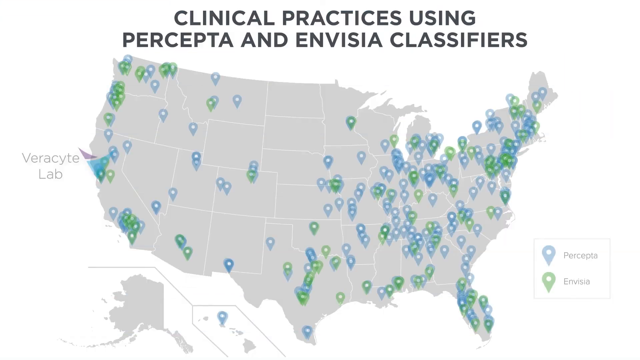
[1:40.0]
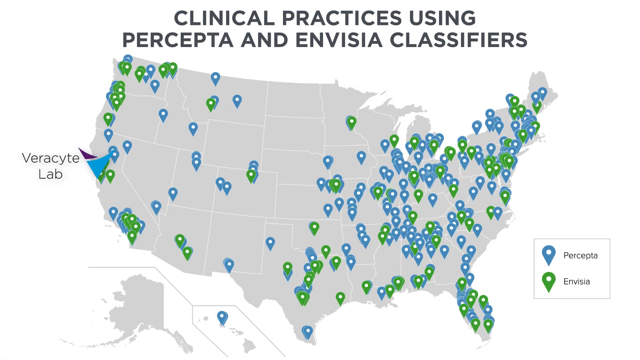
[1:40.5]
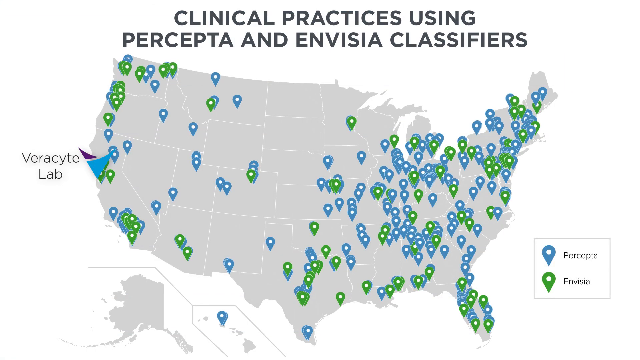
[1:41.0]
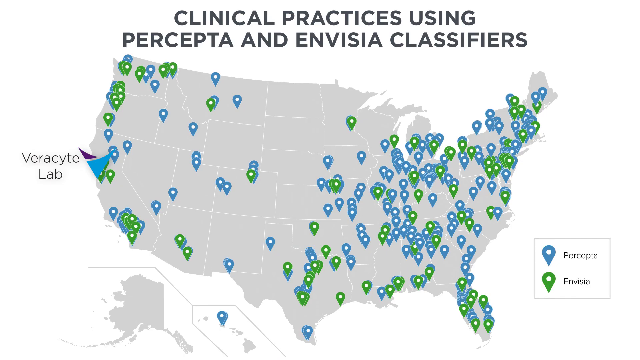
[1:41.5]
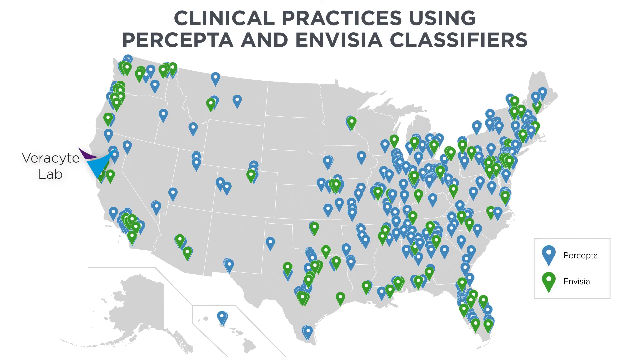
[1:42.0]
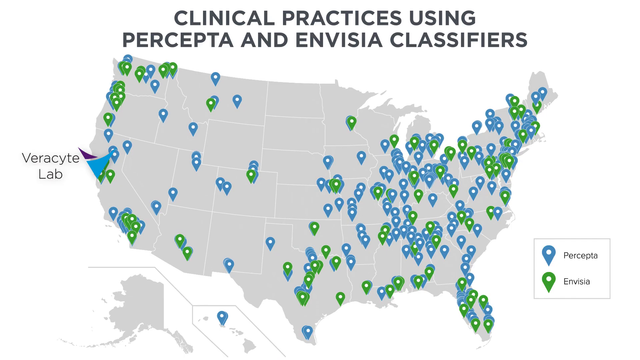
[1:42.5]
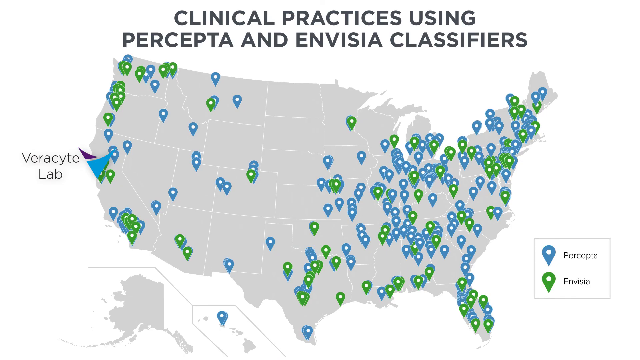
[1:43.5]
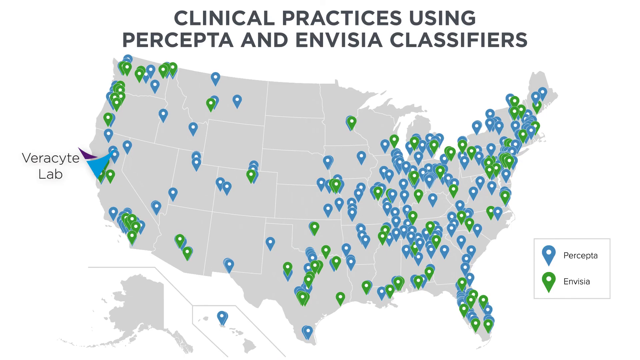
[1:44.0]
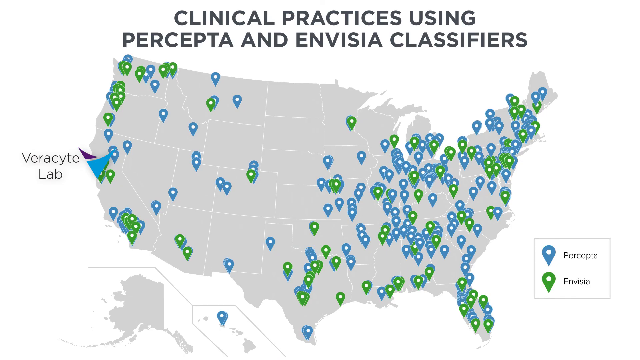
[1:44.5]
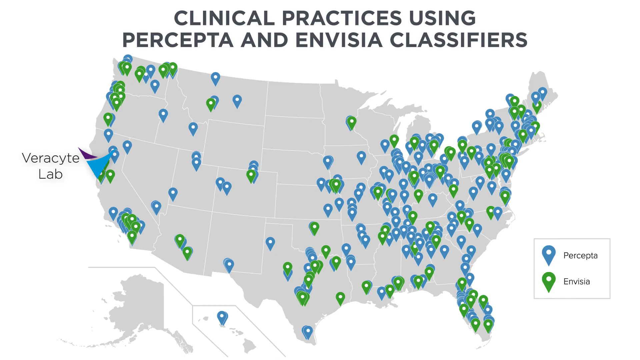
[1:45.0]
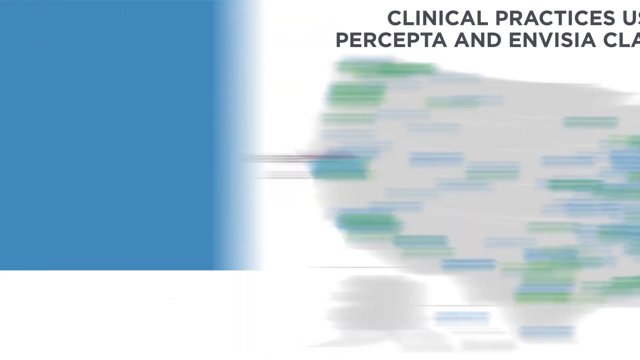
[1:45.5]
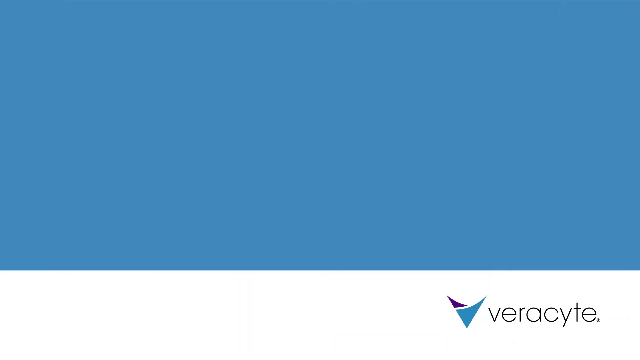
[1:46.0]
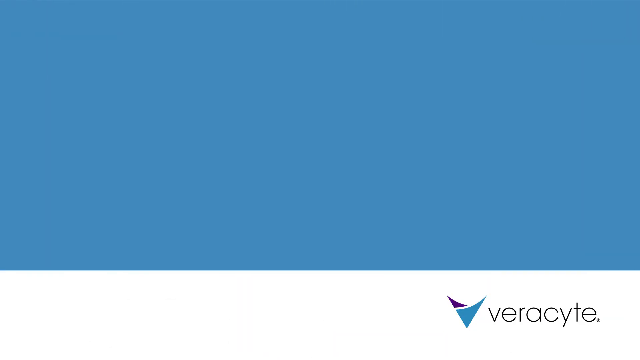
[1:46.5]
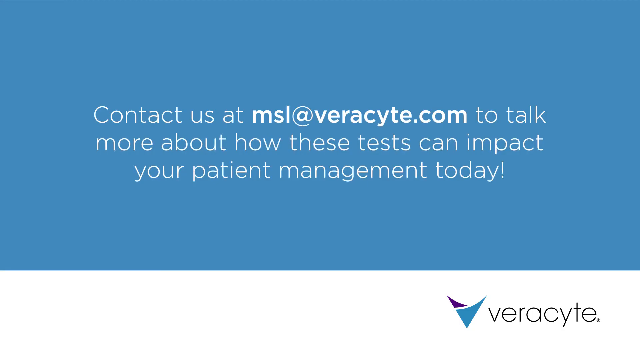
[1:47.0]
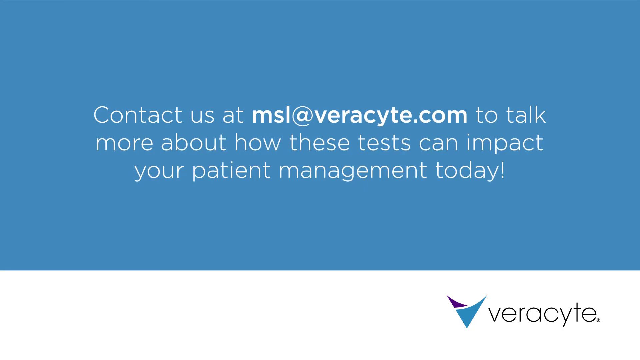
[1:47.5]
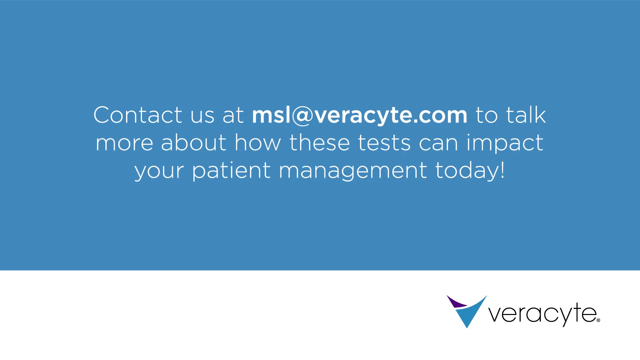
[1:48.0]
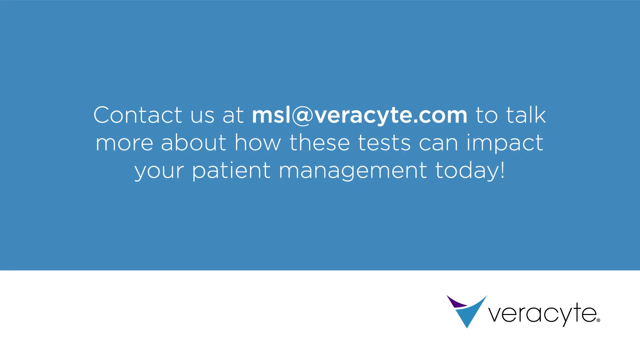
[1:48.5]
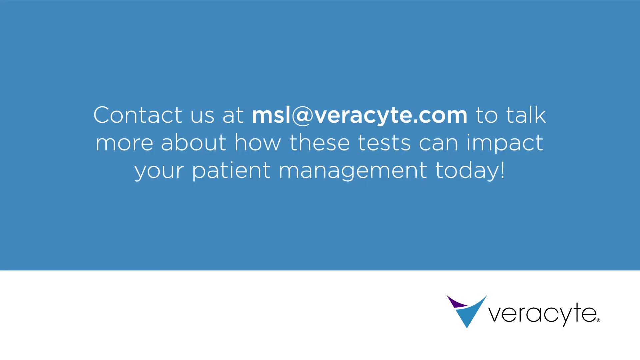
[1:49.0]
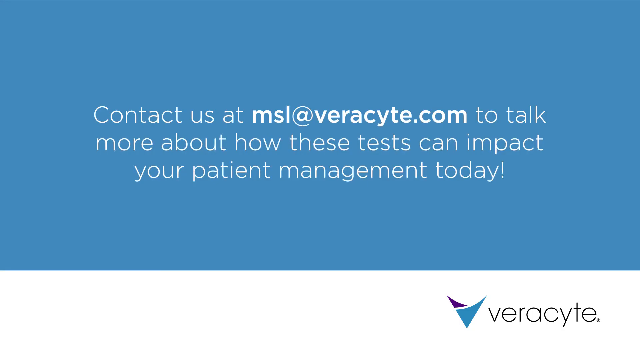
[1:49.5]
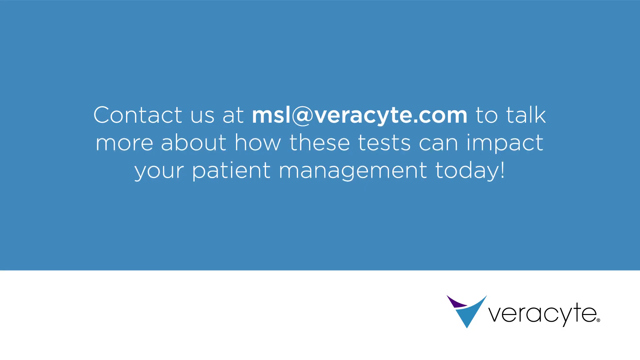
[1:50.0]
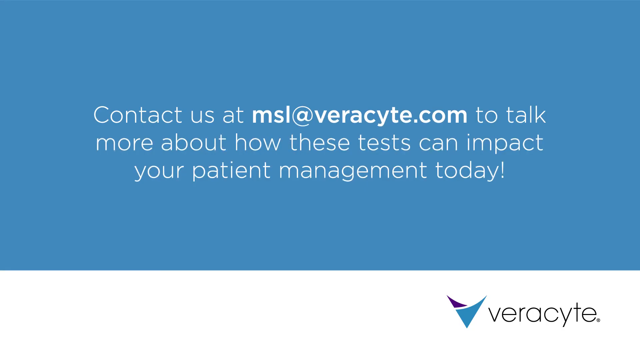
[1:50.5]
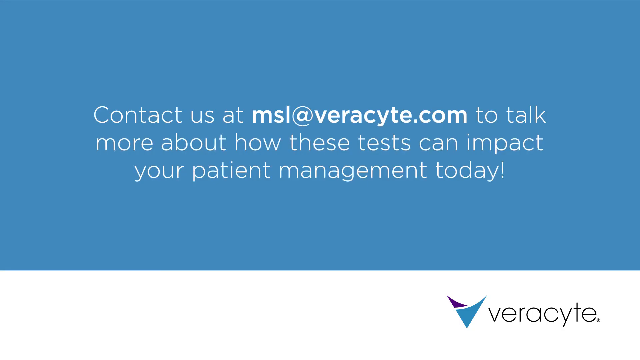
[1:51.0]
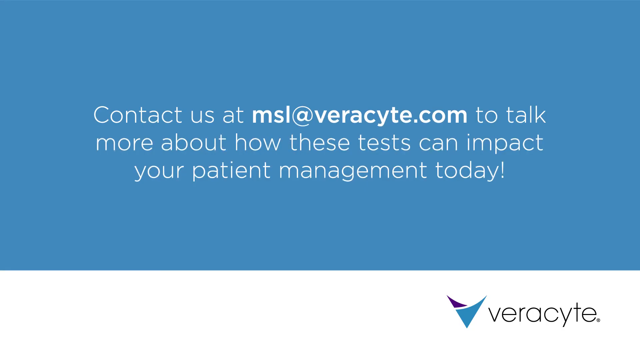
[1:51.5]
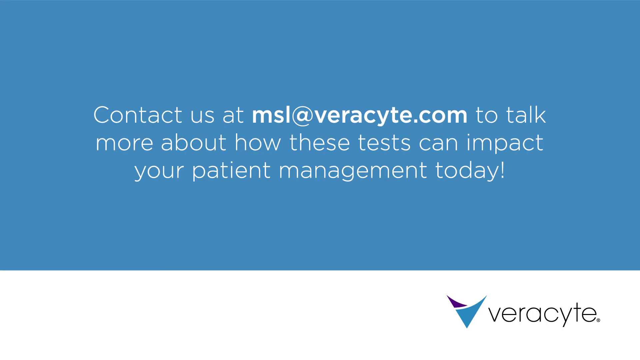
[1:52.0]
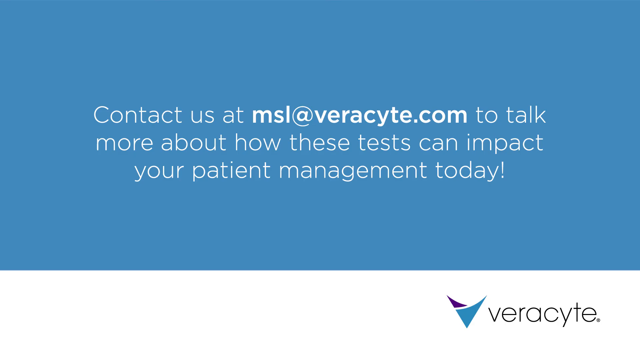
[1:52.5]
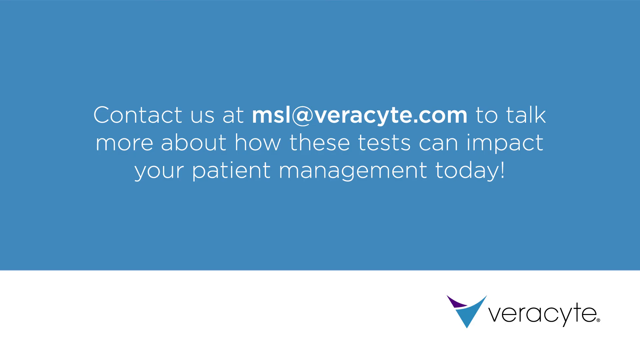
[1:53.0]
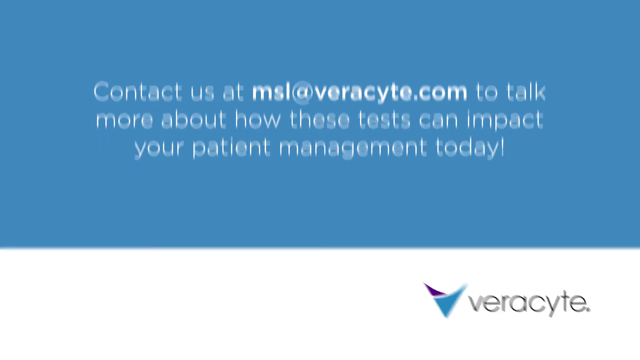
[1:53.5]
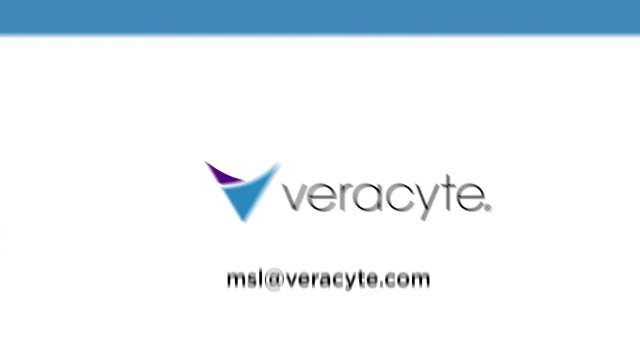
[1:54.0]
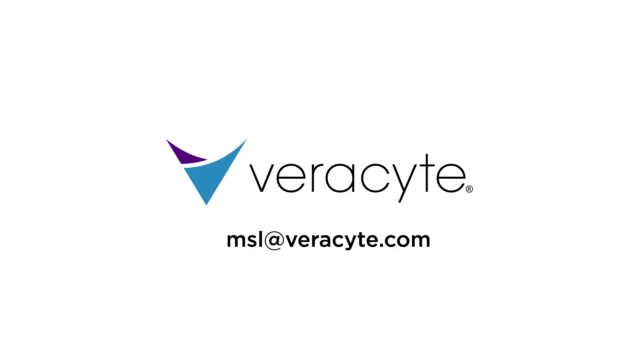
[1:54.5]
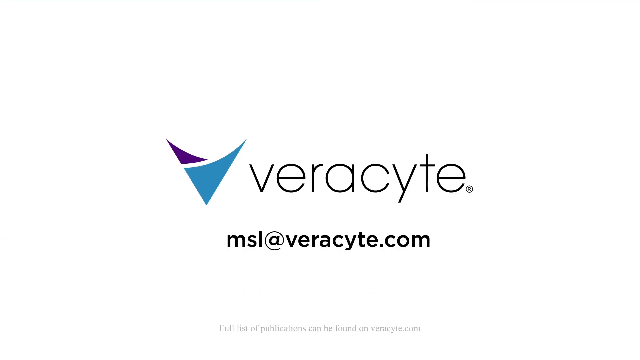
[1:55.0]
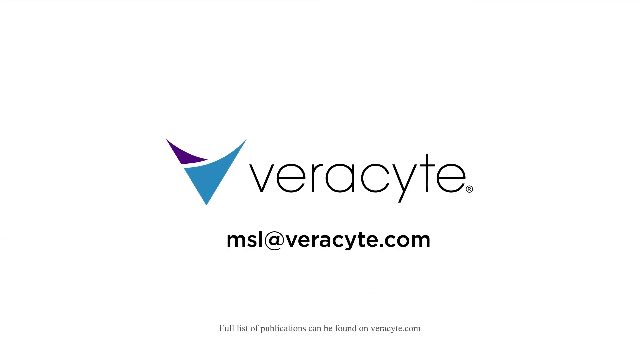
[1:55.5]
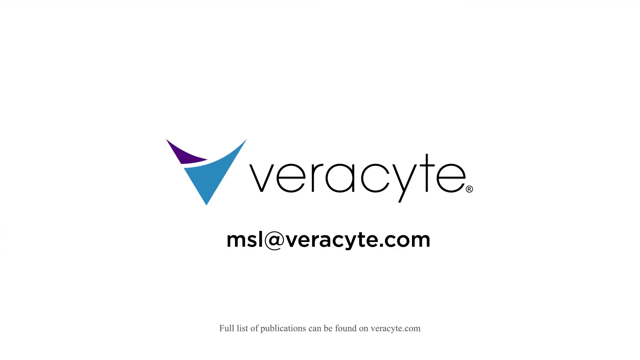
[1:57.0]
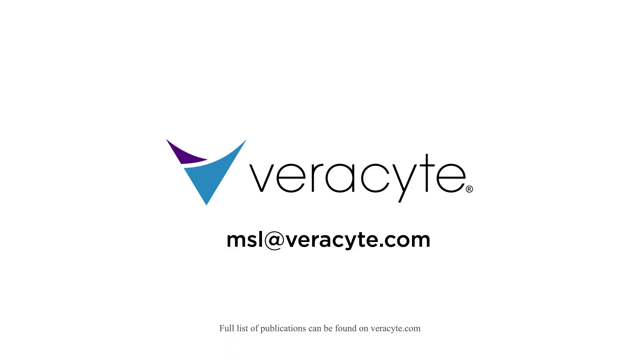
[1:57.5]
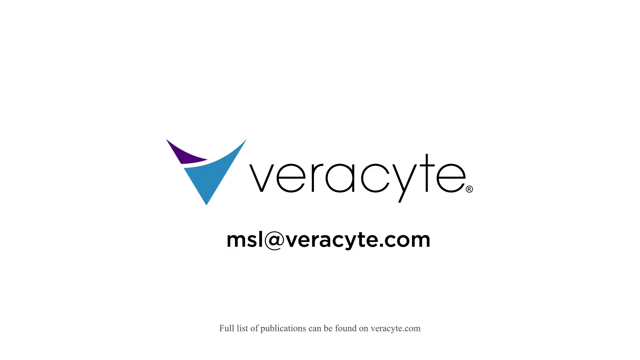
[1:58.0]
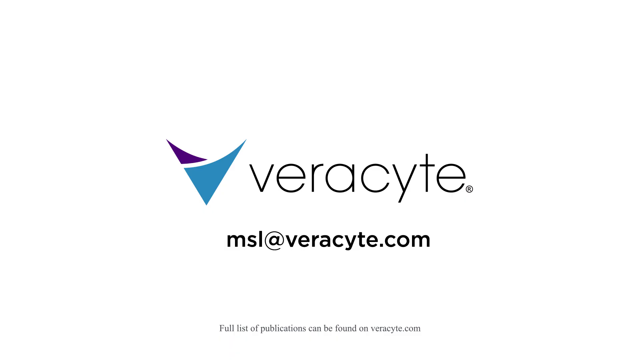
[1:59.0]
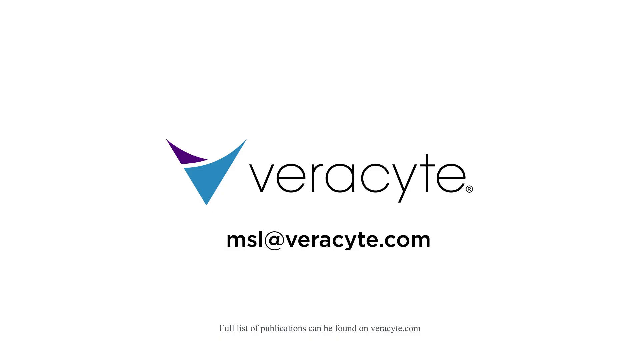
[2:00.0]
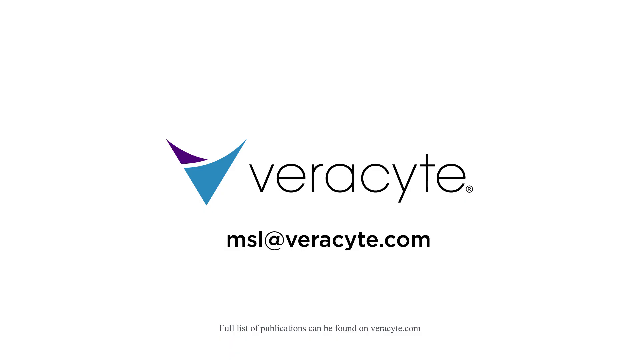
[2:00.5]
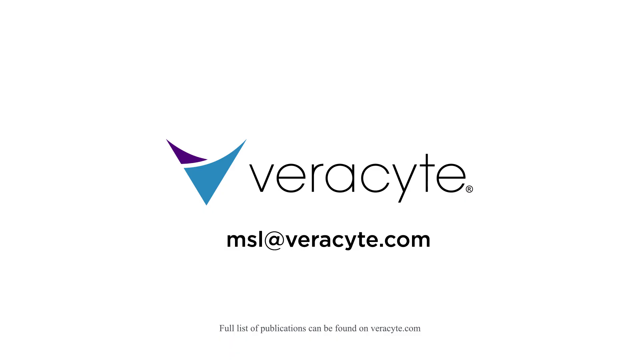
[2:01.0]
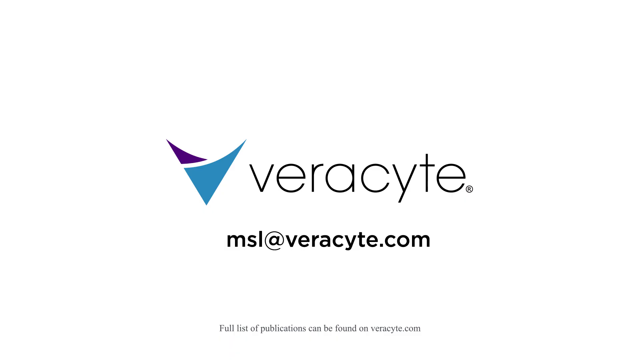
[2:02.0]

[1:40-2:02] A drawing of the United States of America appears, rendered in gray with only the outlines of the states in white. Above the map, the text reads "clinical practices using Percepta and Invisia classifiers." An inset in the lower right-hand square shows a blue pin drop labeled "Percepta" and a green pin drop labeled "Invisia." Blue and green pin drops are spread all over the map, heavily concentrated in the eastern U.S. and the Midwest, fewer throughout the Central Plains, and more along the West Coast from Oregon down through California, with the states in between more sparse. An inset at the bottom shows Alaska and Hawaii. On the left-hand side of the map, on the coast of California, a label reads "Veracyte Lab" with the Veracyte logo. The video then moves to a blue screen reading "contact us at msl.veracyte.com to talk more about how these tests can impact your patient management today." The Veracyte logo is in the lower right-hand side of the screen and then zooms up, showing "Veracyte" and "msl.veracyte.com."